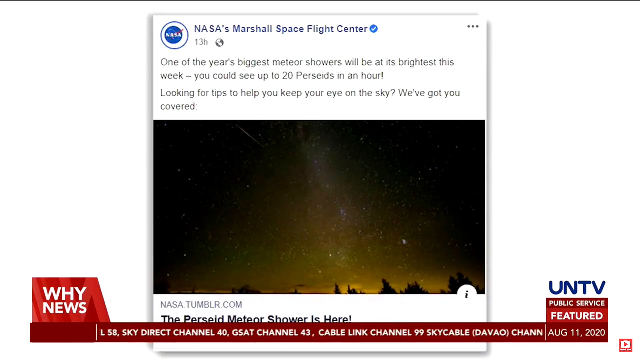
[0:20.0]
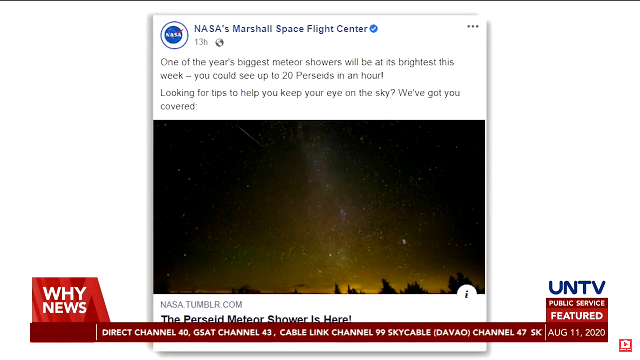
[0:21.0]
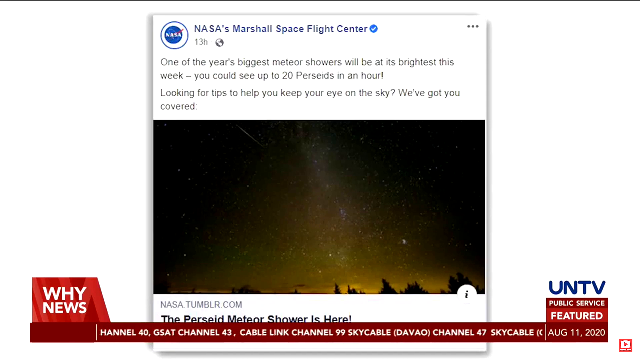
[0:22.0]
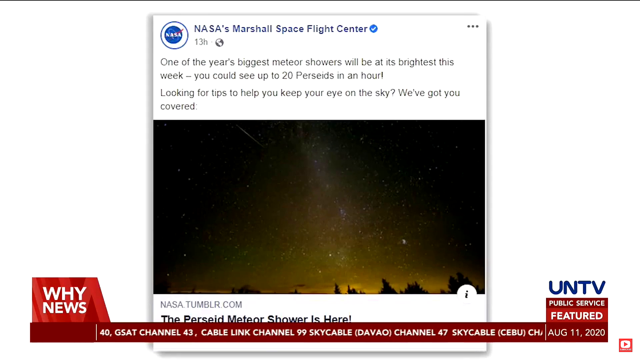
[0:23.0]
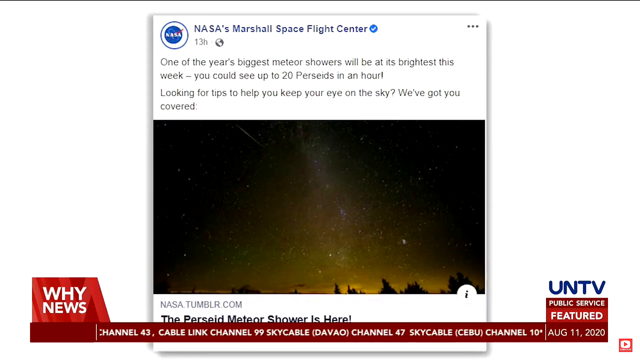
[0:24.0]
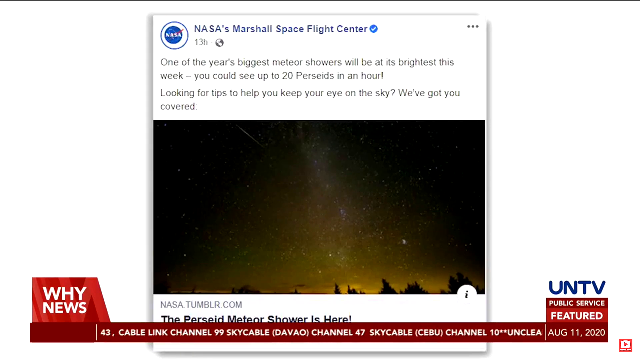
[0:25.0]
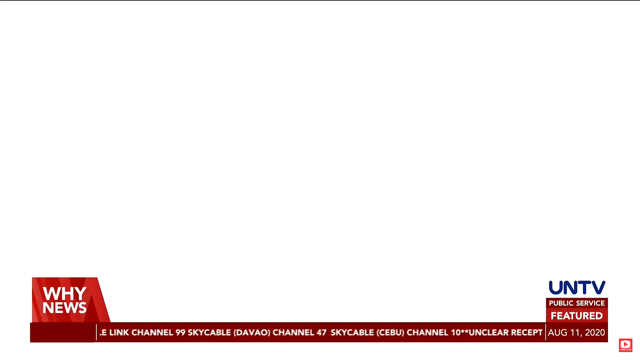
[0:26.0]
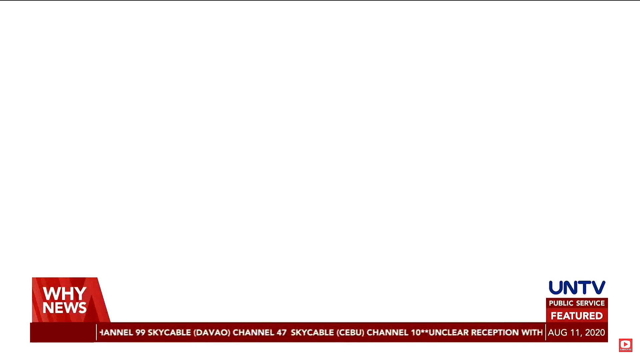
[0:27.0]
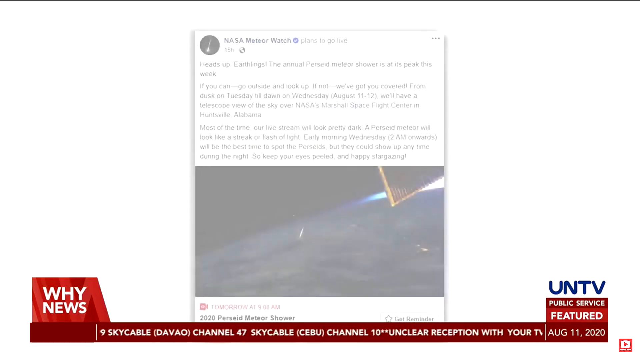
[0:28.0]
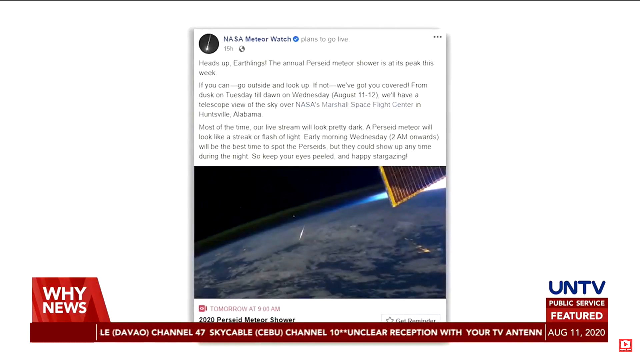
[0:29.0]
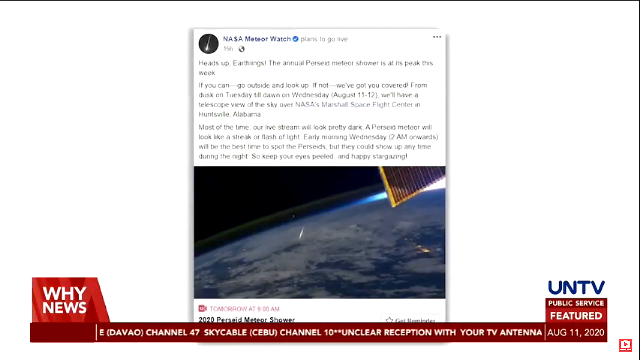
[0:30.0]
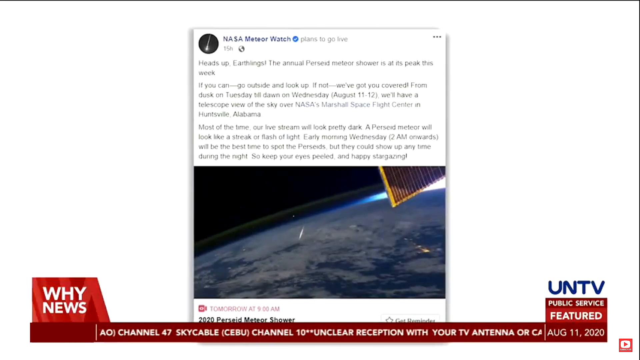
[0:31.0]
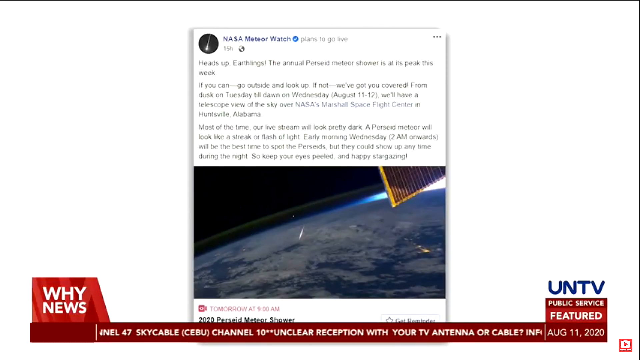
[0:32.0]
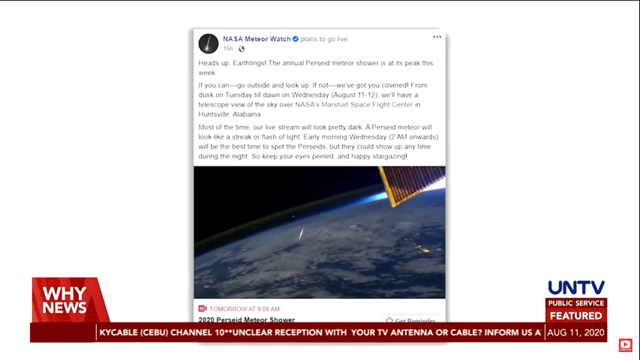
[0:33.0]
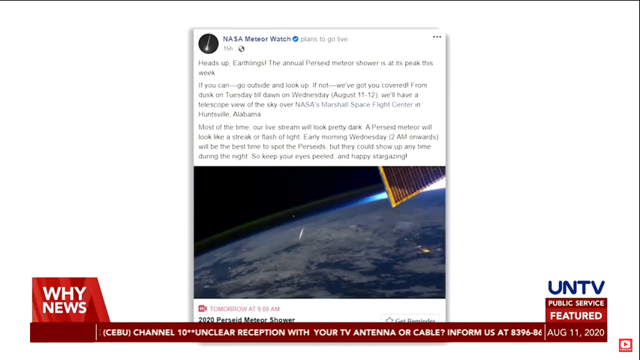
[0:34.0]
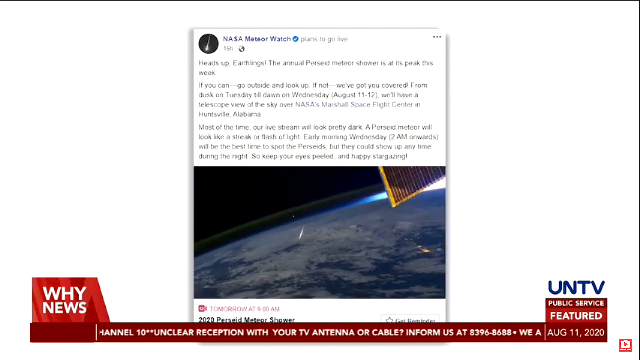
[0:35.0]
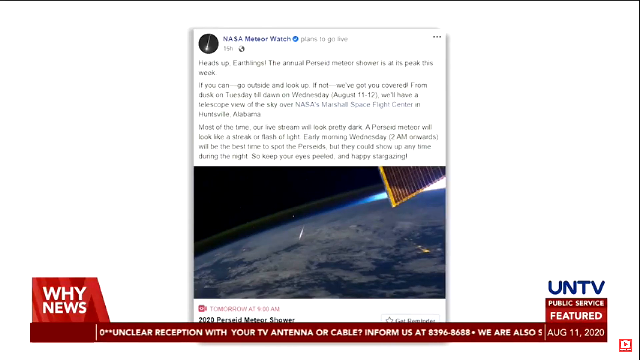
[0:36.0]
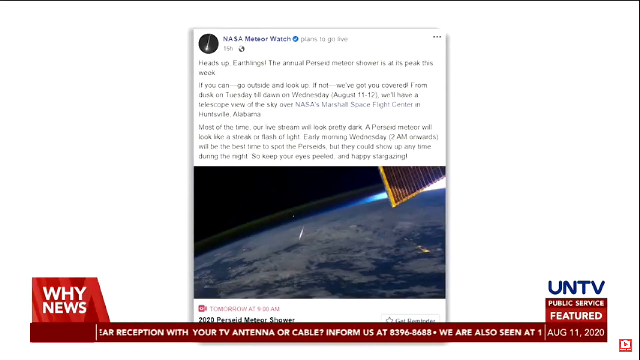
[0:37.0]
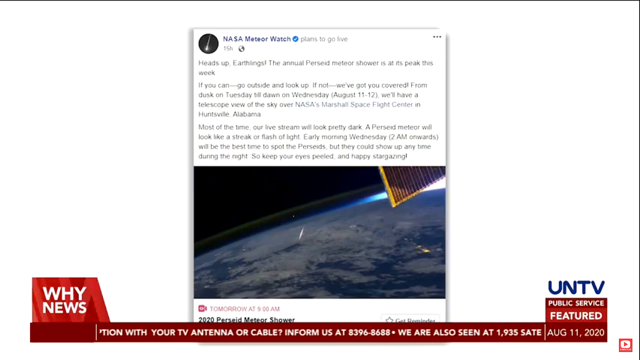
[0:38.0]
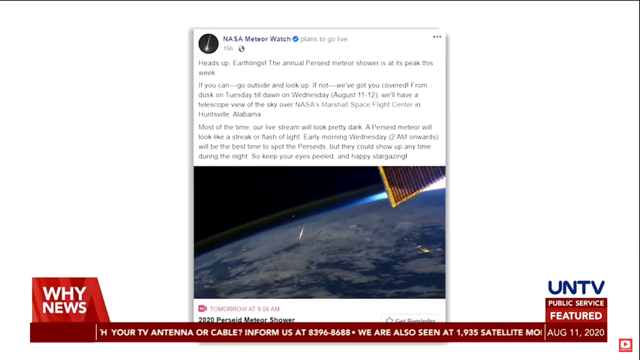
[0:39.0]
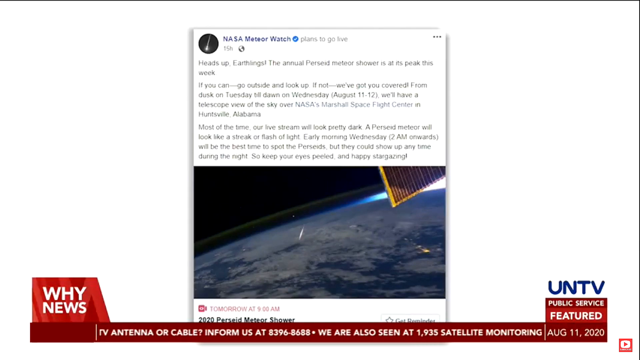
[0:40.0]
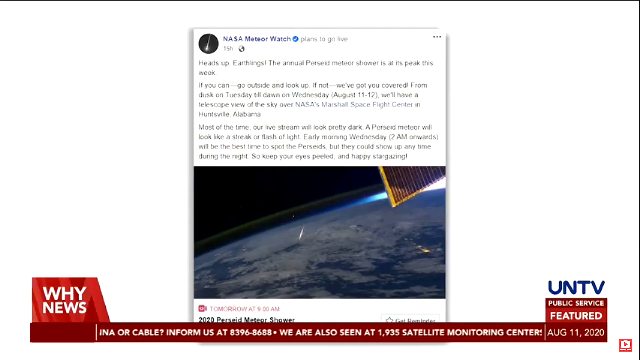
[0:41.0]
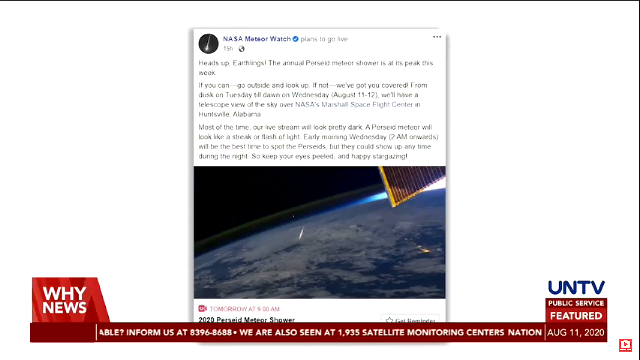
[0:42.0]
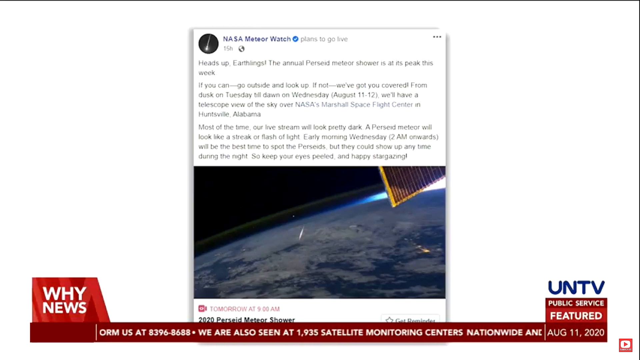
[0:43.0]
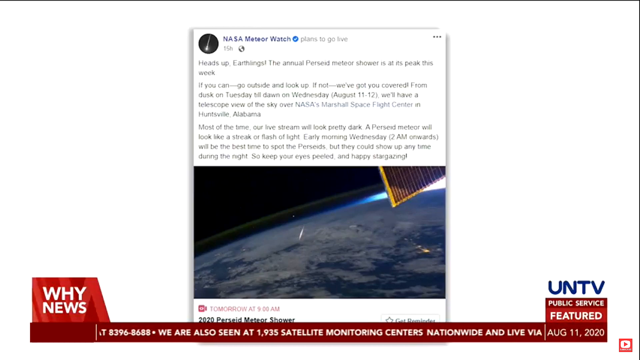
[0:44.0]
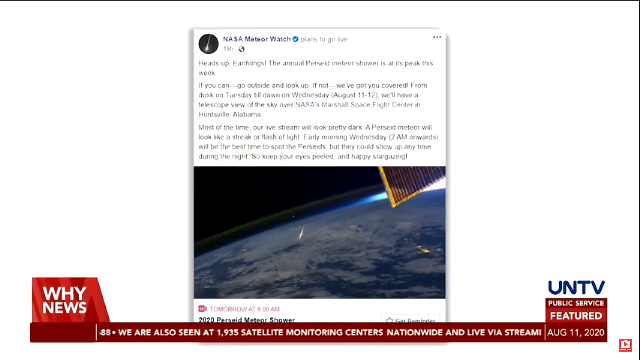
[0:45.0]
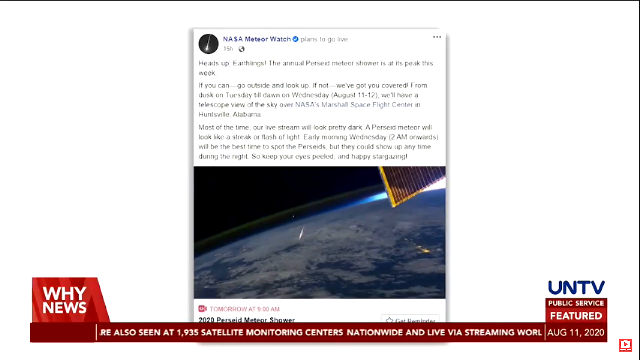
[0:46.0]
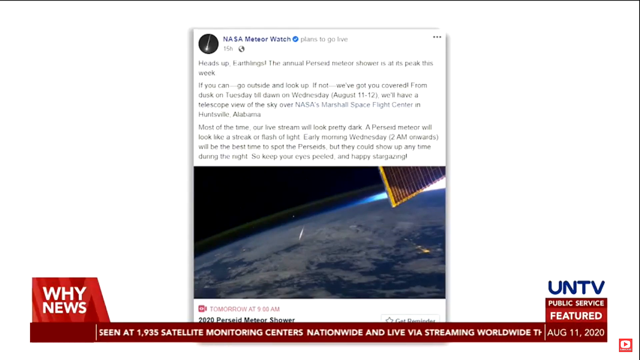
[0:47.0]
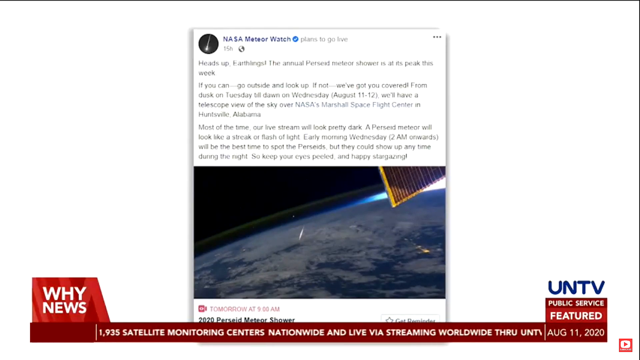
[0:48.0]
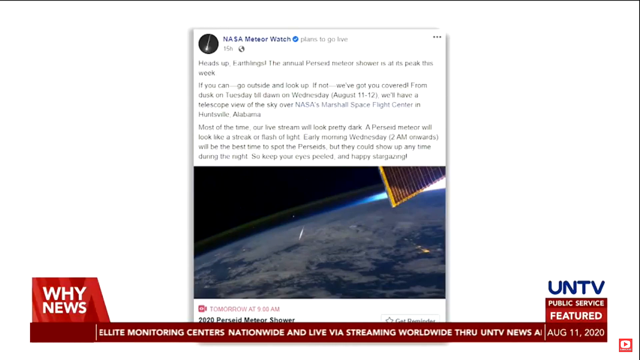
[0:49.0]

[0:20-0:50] The NASA Marshall Space Flight Center post, marked as posted 13 hours ago, appears to be on Facebook and shows a sky full of many colorful, bright stars. Another NASA post, from 15 hours ago, says the account plans to go live. This post says the annual meteor shower peaks this week and tells people to go outside and look up, and if they can't, "we've got you covered." It gives the time as dusk on Tuesday until dawn on Wednesday, August 12th, and says there will be a telescope view of the sky over NASA's Marshall Space Flight Center. It notes that the live stream will look pretty dark most of the time and that a meteor will look like a streak or a flash of light. It adds that early Wednesday morning, from 2 a.m. onward, is the best time to spot them, but that they could show up any time during the night, so viewers should keep their eyes peeled.